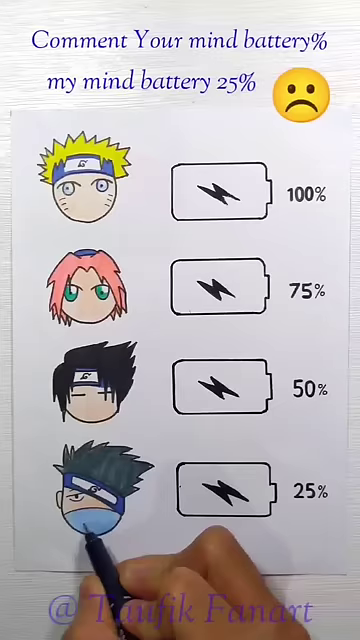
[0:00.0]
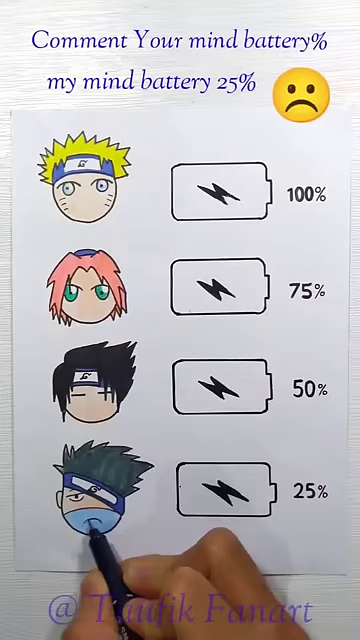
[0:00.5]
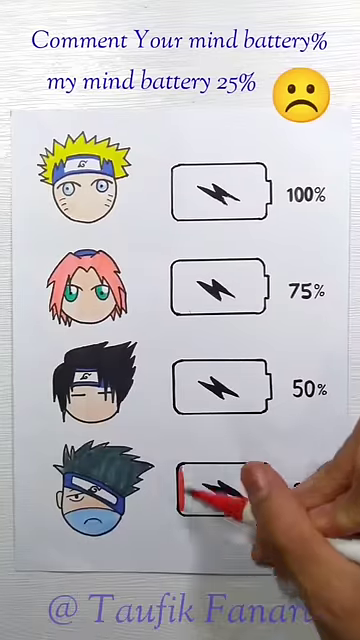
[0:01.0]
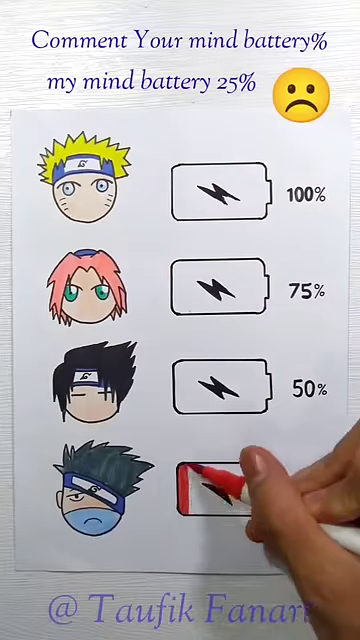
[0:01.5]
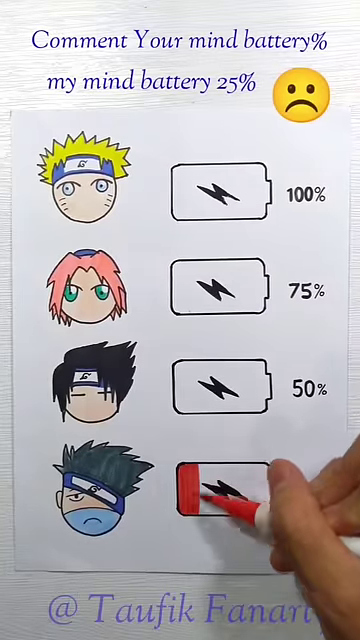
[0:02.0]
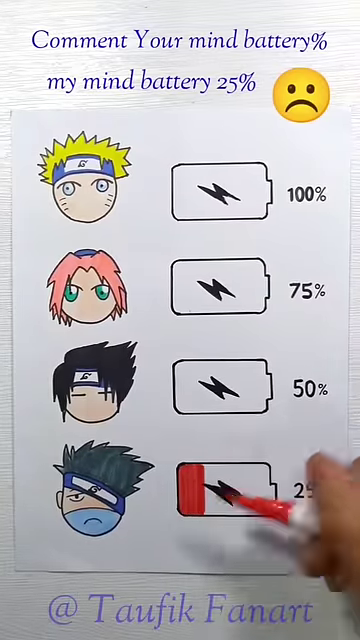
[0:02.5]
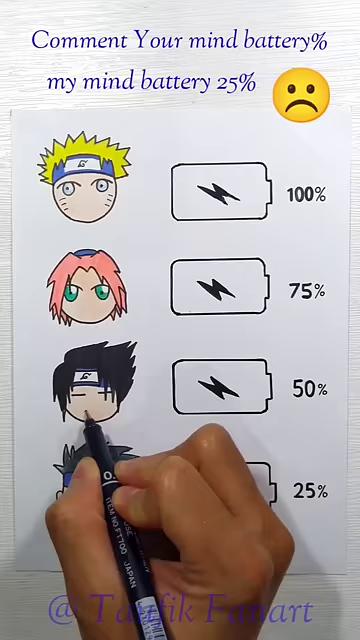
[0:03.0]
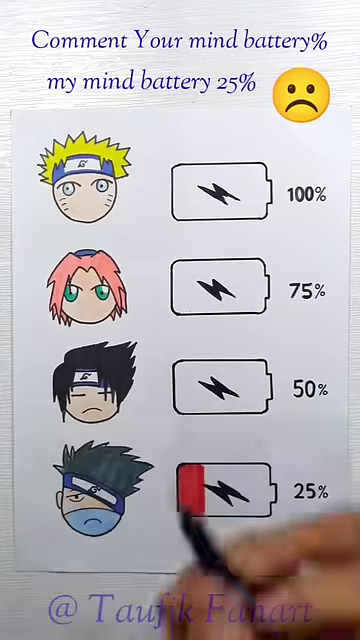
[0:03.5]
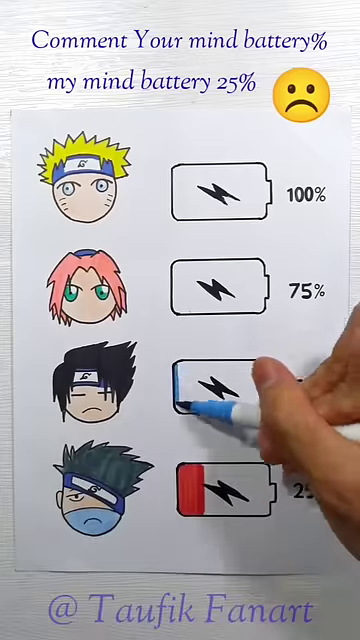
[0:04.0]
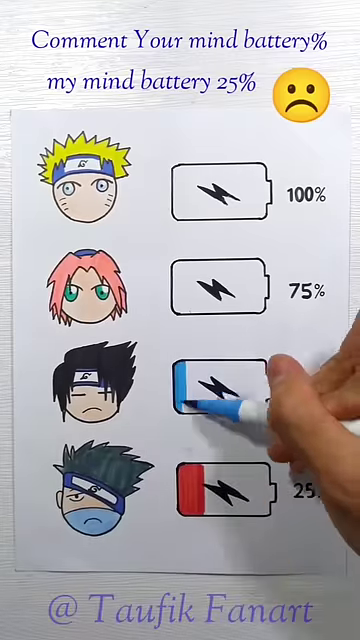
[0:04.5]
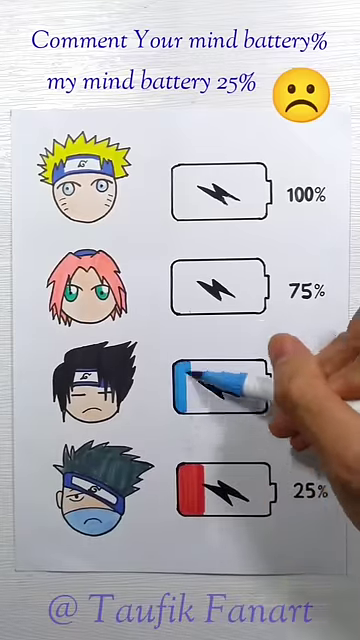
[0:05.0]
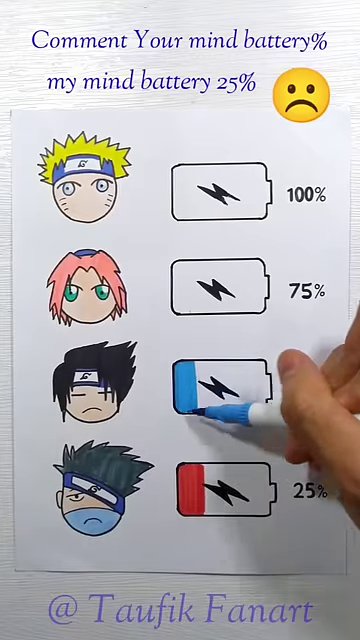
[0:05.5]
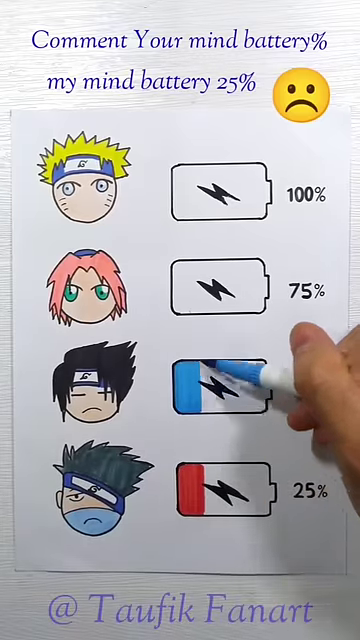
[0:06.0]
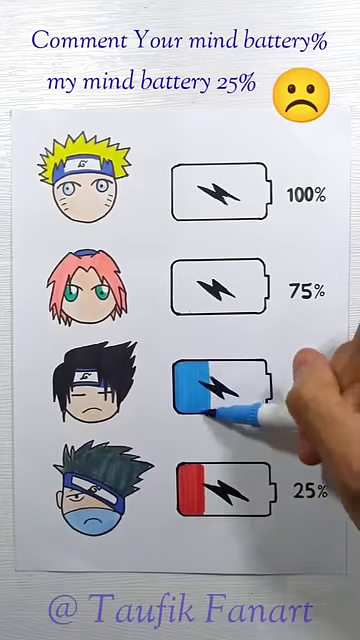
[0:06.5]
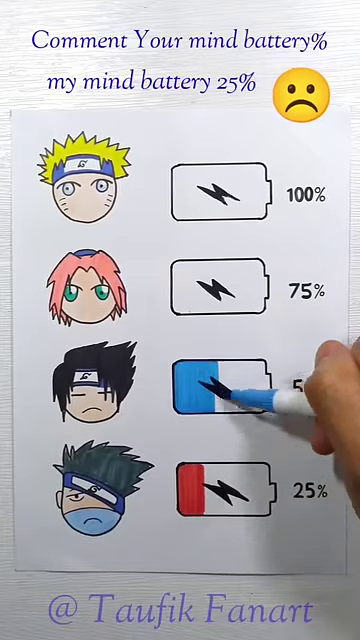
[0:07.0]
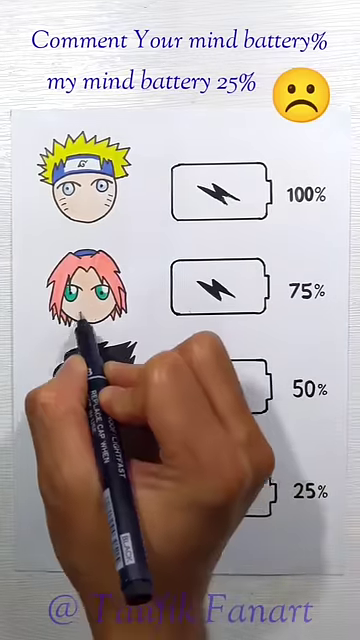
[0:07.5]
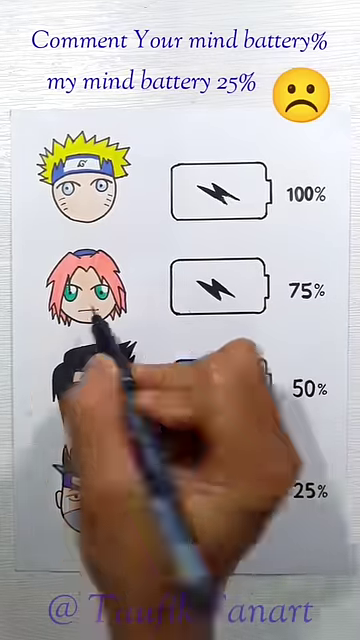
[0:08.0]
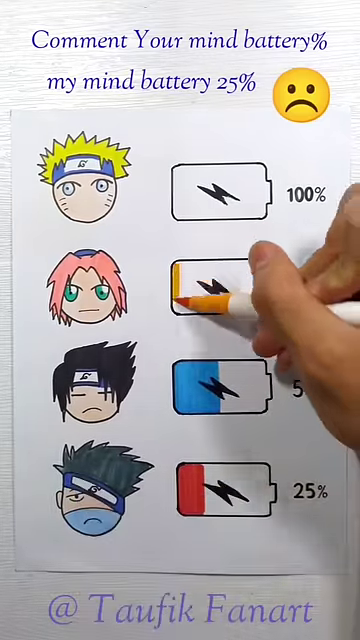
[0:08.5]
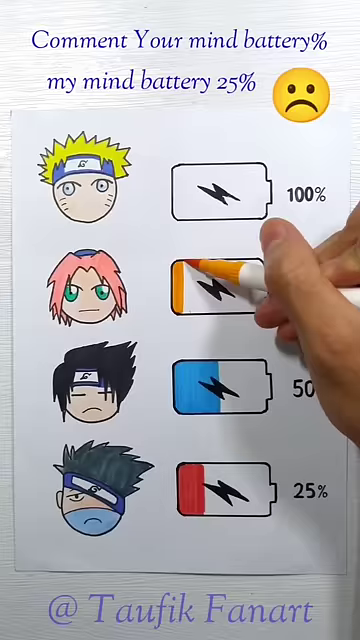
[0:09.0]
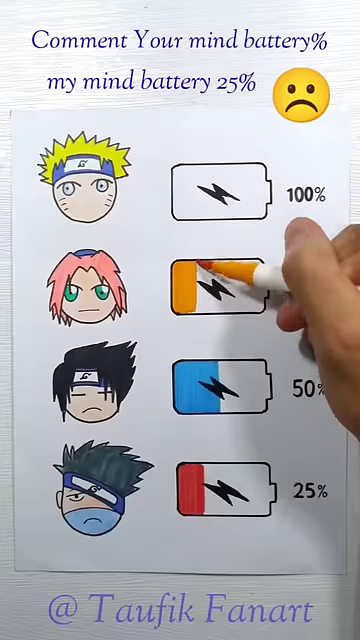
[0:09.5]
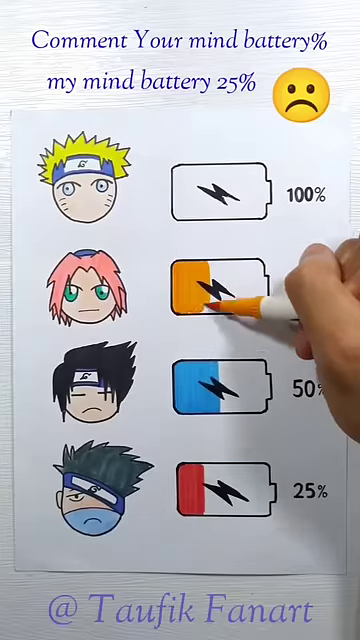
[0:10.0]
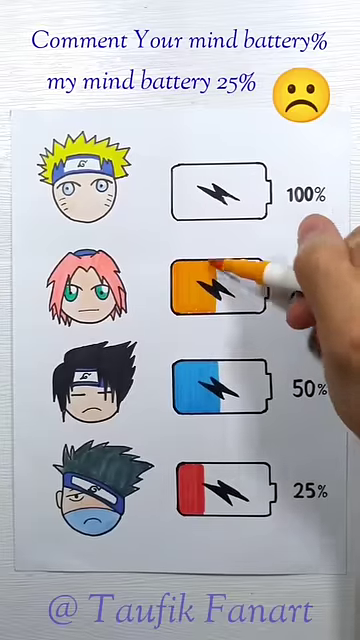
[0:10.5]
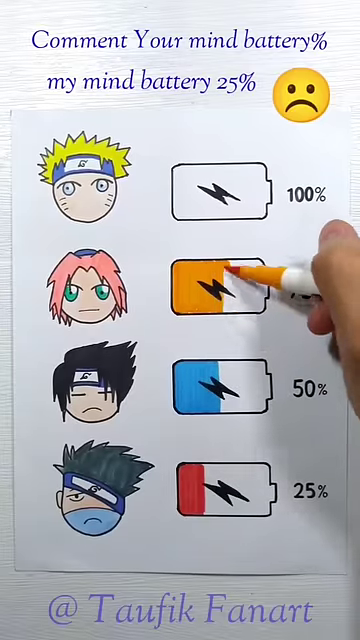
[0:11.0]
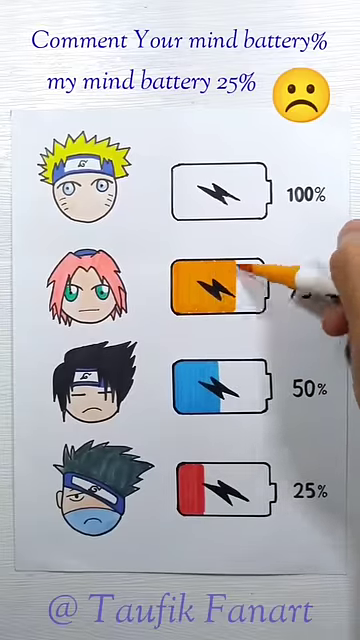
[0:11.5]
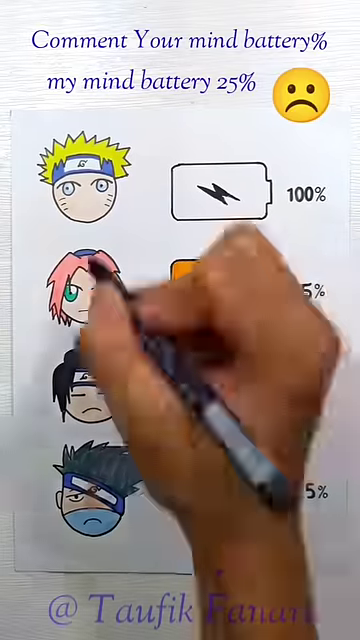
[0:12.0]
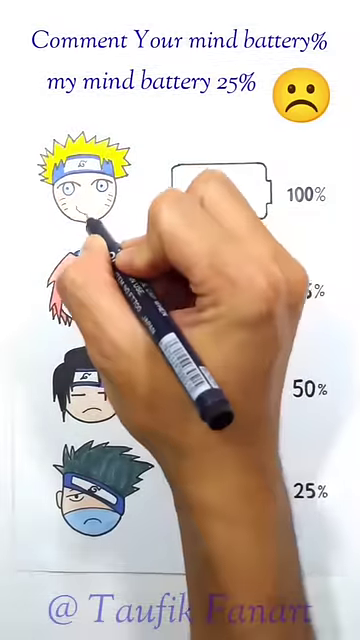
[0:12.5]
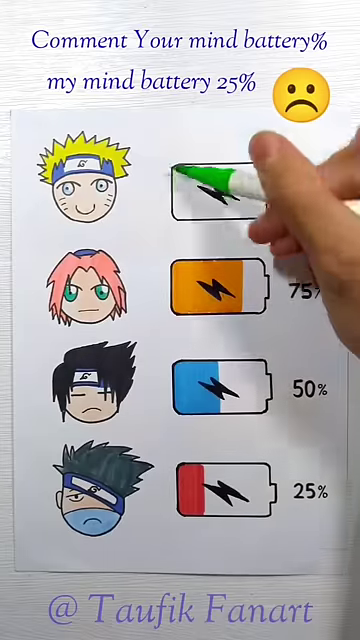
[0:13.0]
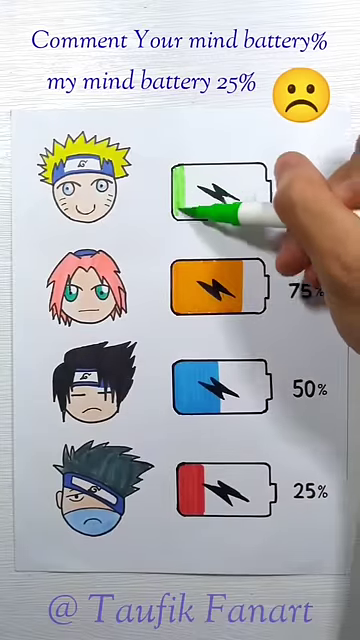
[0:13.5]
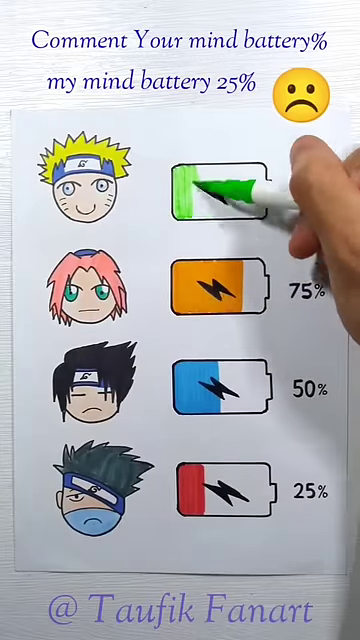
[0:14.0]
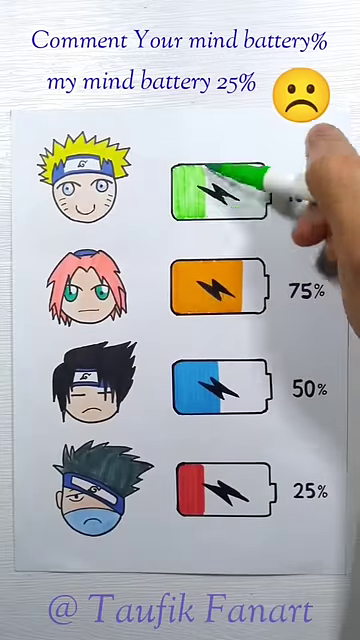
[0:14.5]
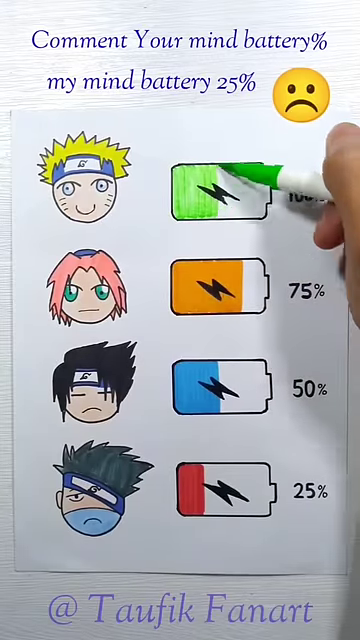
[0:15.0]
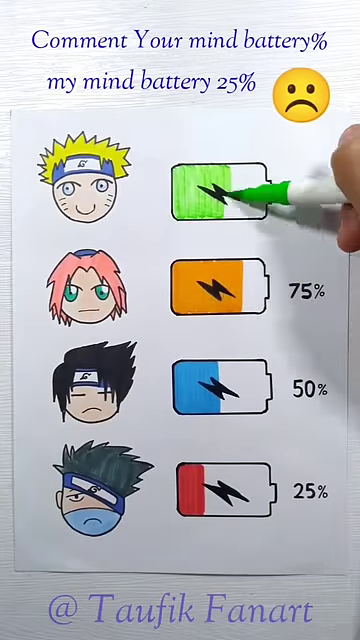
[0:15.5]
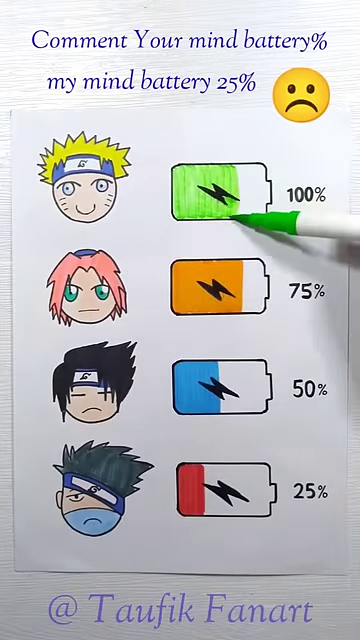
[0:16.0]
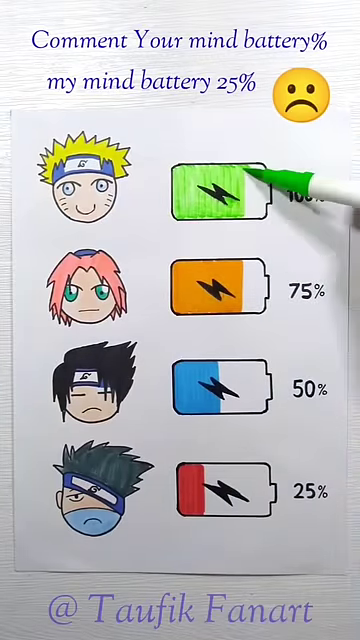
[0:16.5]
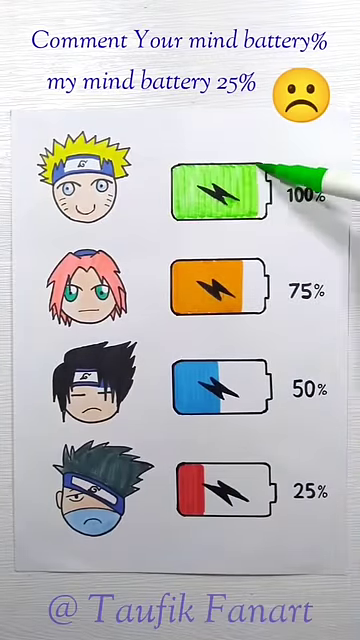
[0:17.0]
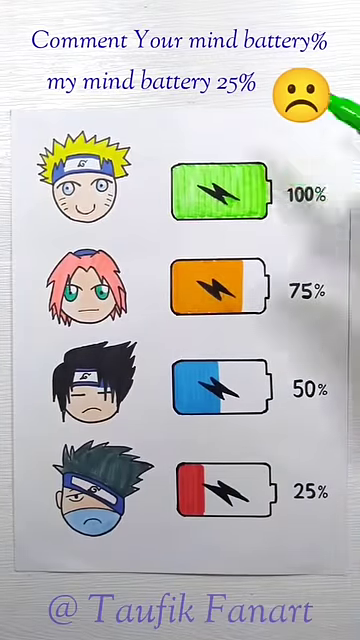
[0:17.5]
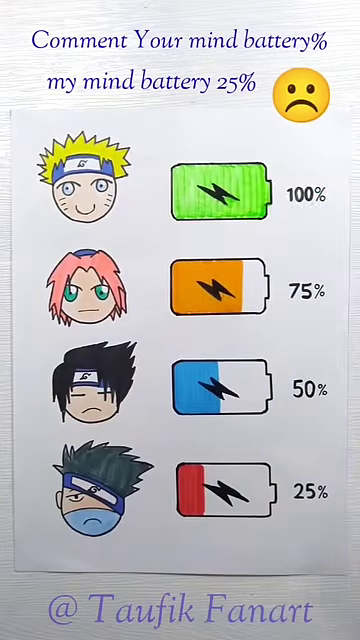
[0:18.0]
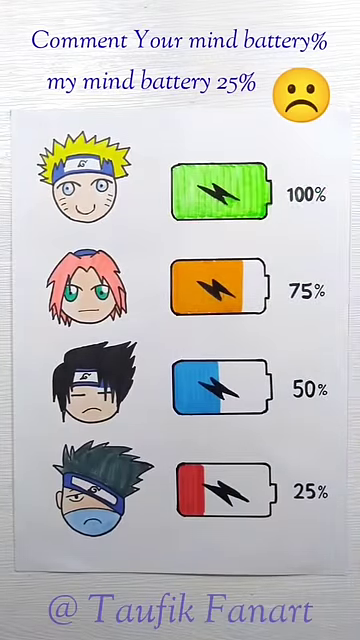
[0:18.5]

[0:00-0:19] The video, titled mood check, opens with four anime-style characters, shown as just their faces and heads, arranged from top to bottom on the left side of a page. To the right of each is a small drawn symbol that looks like the outline of a battery with a lightning bolt in the middle. Working from bottom to top, the artist begins filling in the little batteries to show each character's mood. Text reads "what's your mood?", which is apparently the title of the video. The page being drawn on also has text at the top: "comment your mind battery percent my mind battery 25%", the title of the page. The bottom character's battery is filled in with red ink and is very low, at 25%. The second character from the bottom has 50%, drawn in blue ink. The third character from the bottom has 75%, with orange ink colored into the battery. The very top character has 100%, filled in with green ink that fills the whole battery outline.